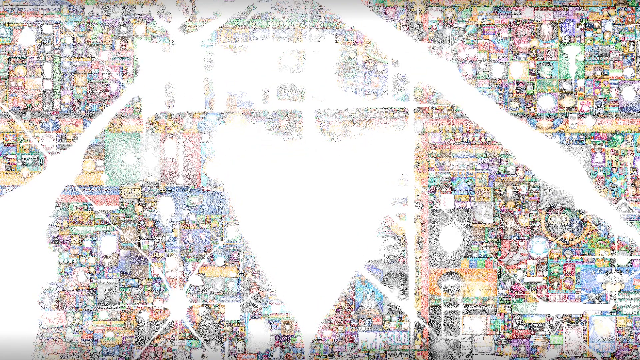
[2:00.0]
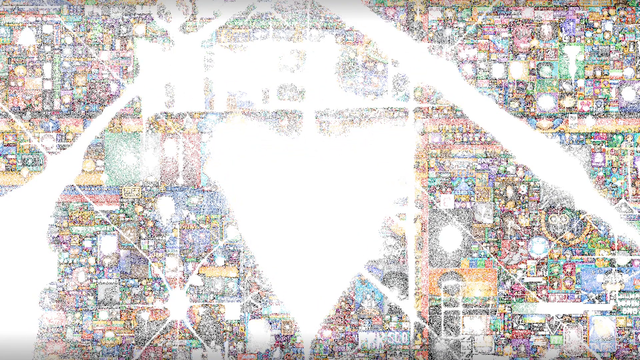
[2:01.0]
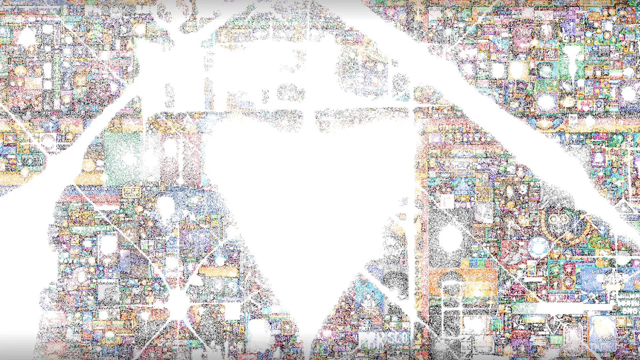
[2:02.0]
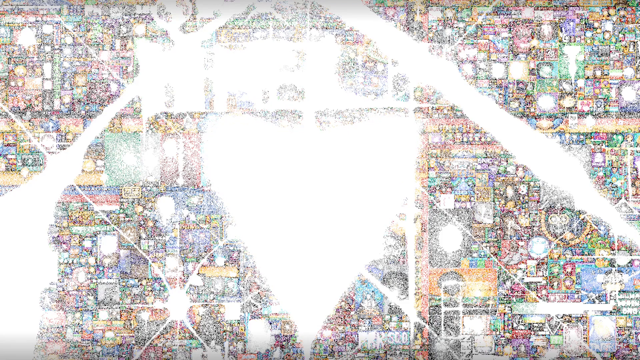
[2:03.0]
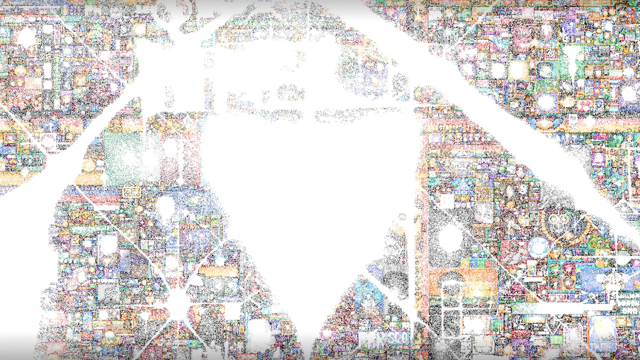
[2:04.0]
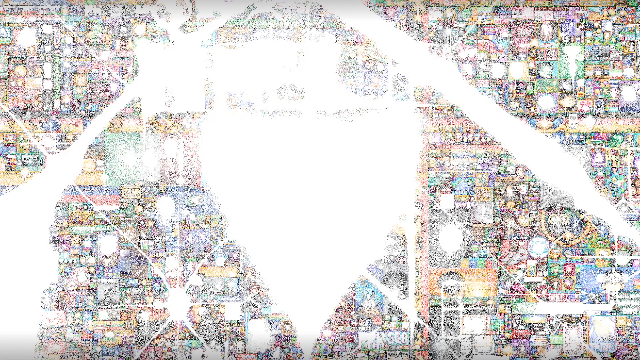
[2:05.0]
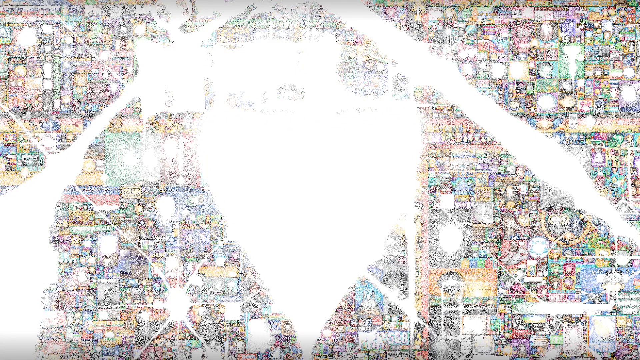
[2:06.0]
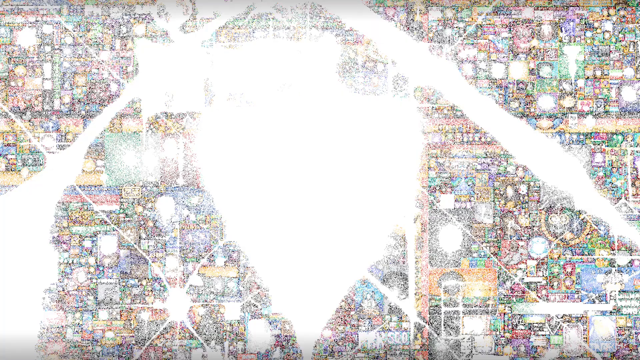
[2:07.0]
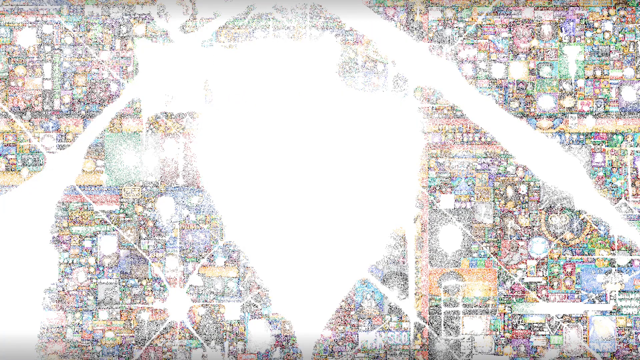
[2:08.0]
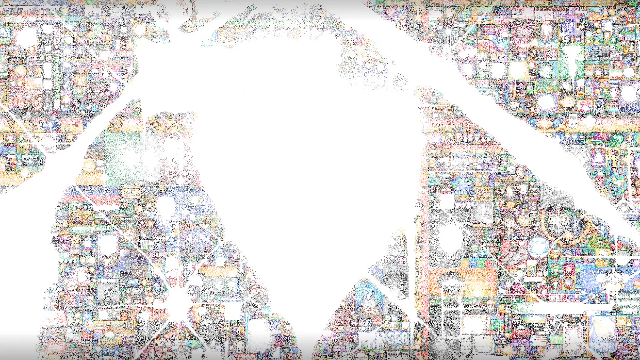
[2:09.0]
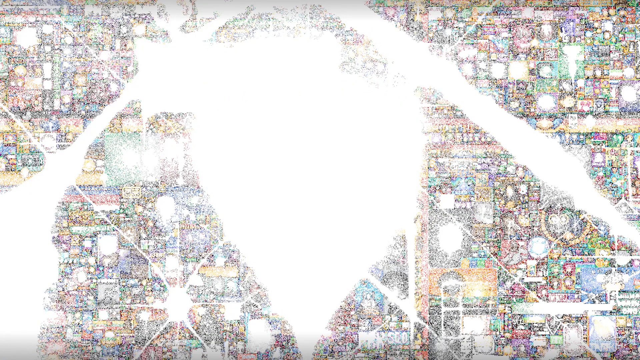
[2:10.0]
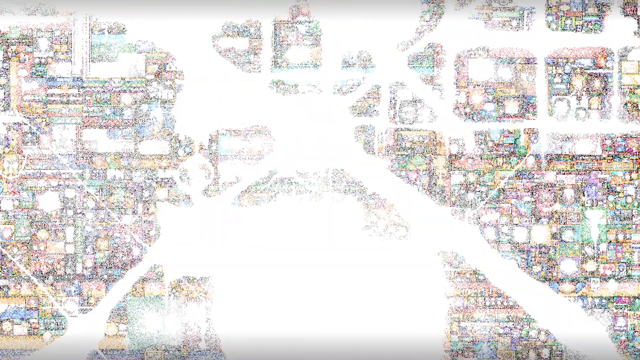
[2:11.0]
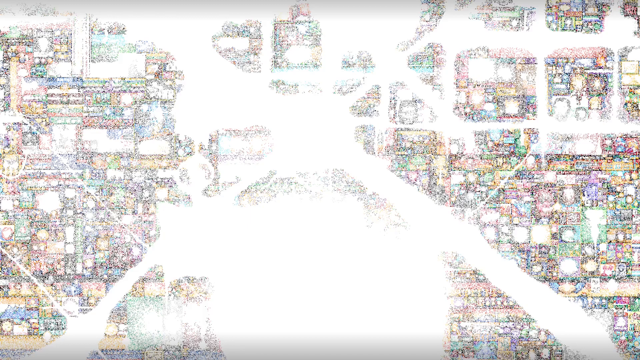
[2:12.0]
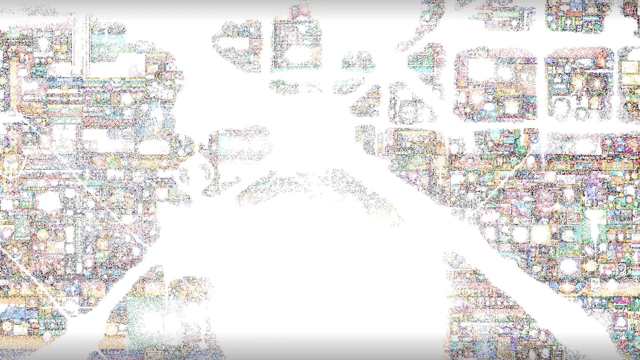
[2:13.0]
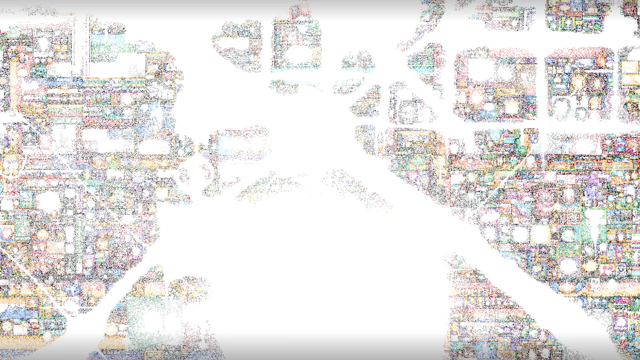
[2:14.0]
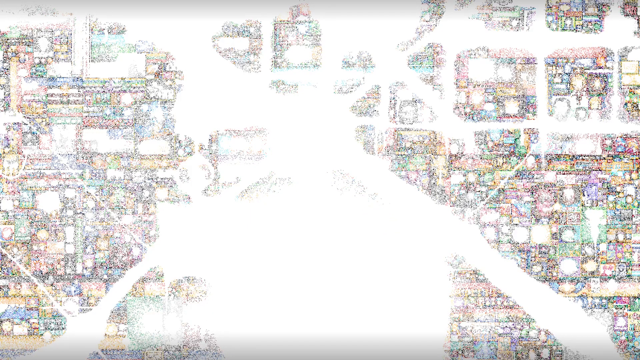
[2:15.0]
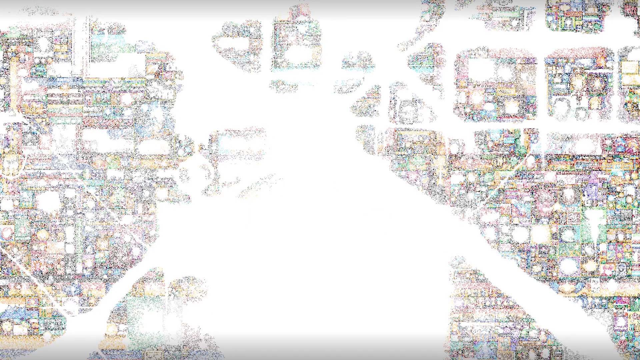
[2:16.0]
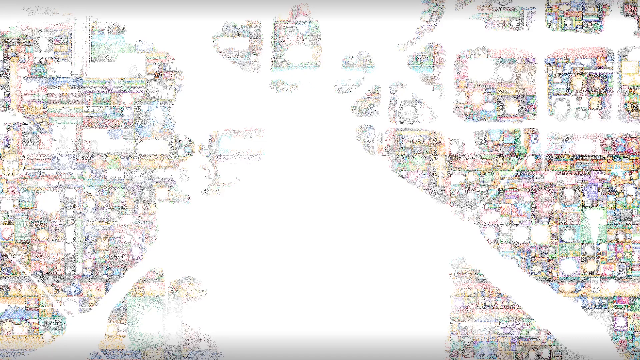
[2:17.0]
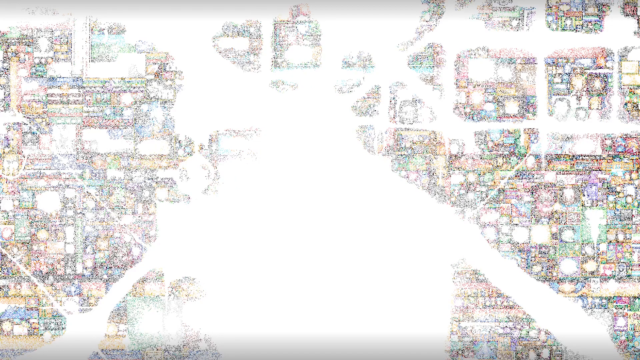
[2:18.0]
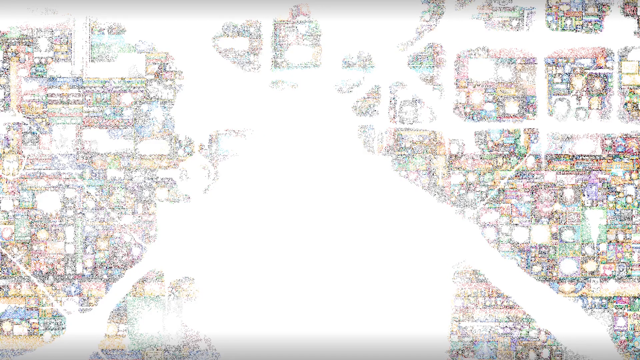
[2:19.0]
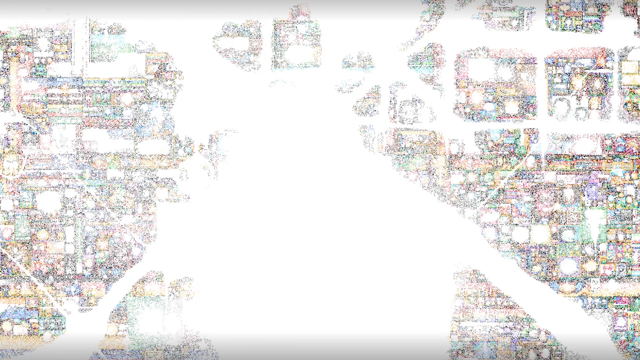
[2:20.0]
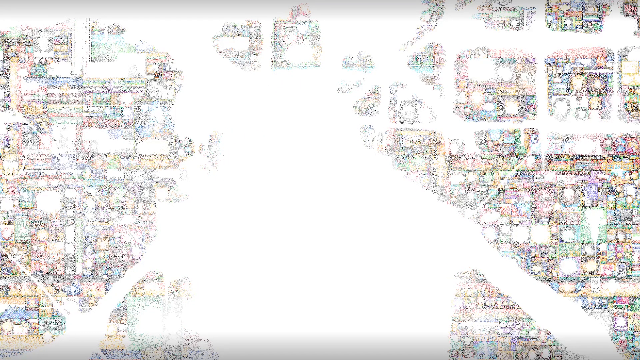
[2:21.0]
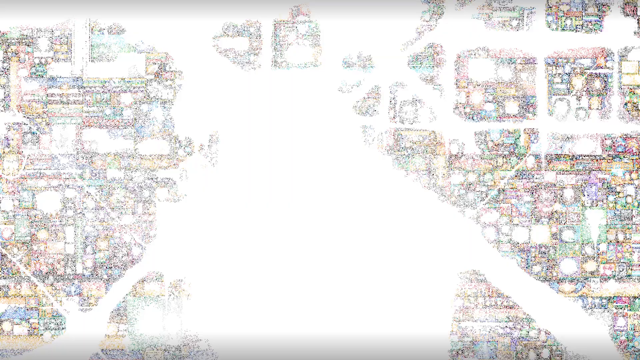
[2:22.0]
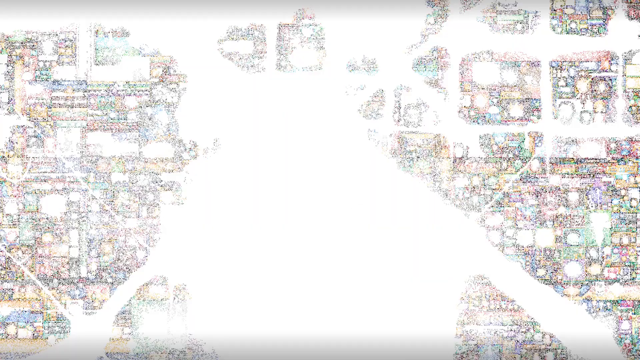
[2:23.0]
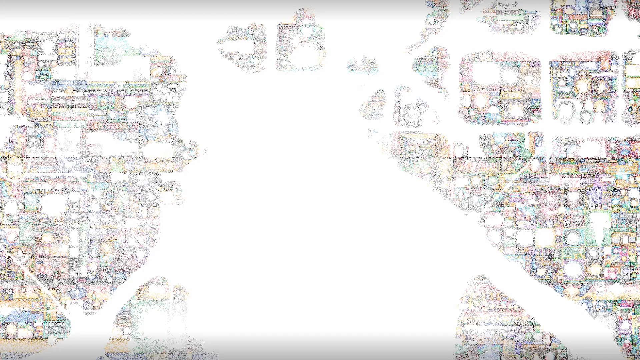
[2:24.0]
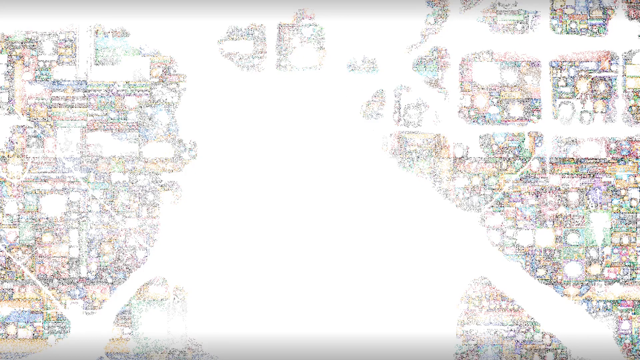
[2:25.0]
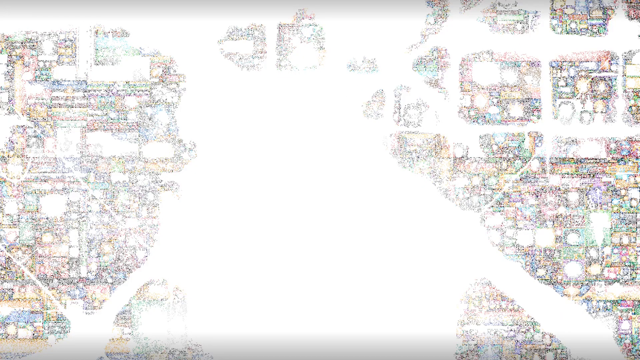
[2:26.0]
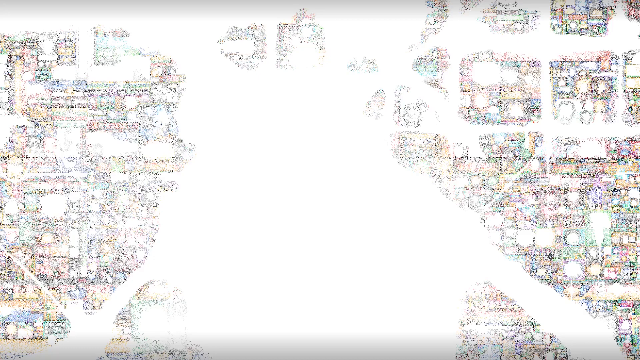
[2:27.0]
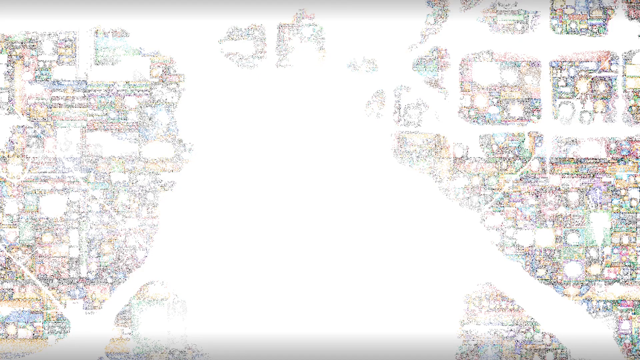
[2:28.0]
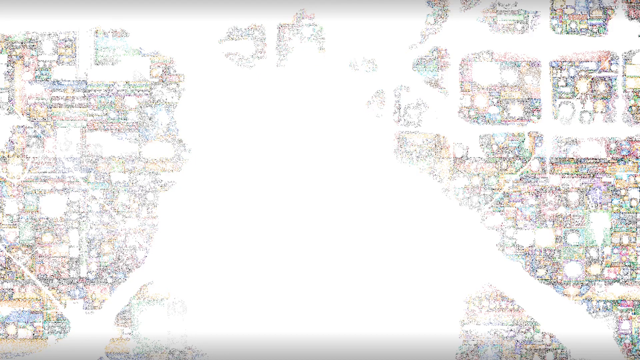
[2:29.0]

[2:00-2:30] Everything is pixelated, disintegrating and disappearing into little dots. The Reddit artwork forms something like a little person down the middle.